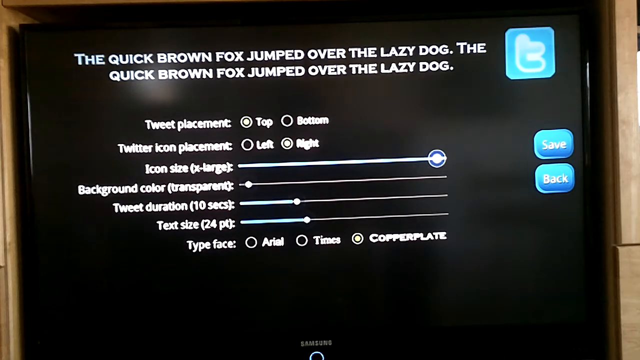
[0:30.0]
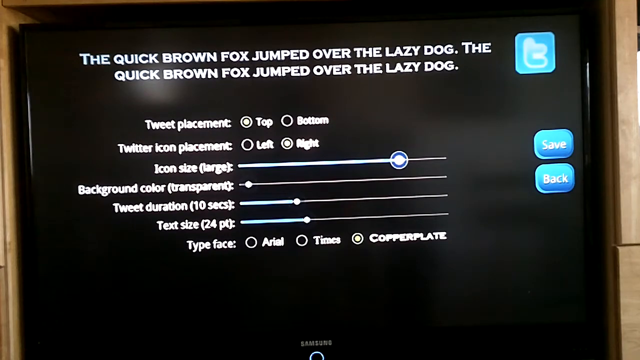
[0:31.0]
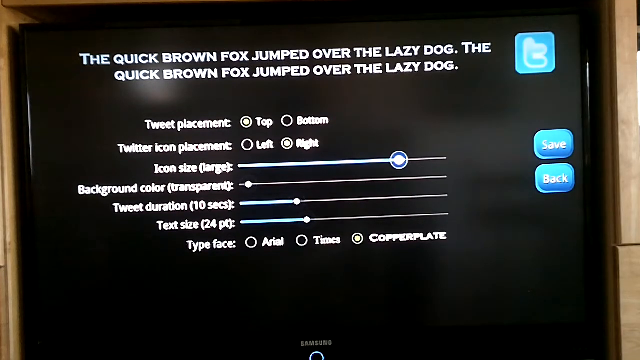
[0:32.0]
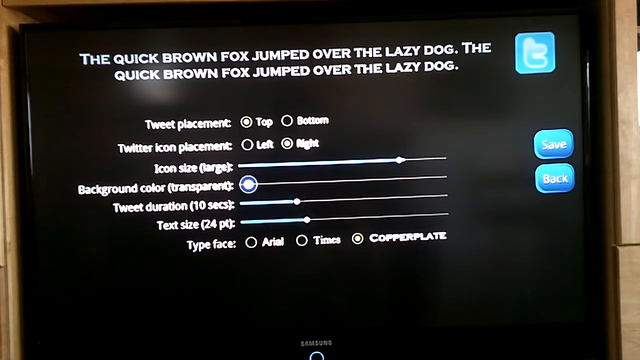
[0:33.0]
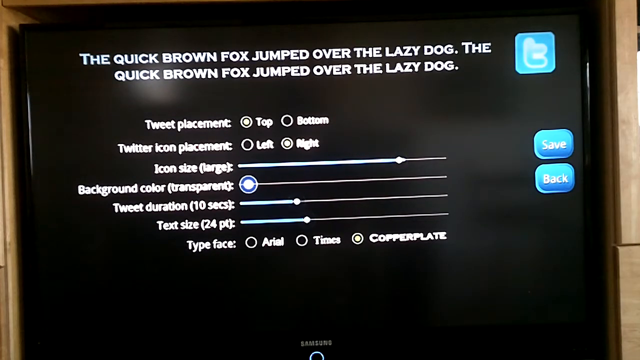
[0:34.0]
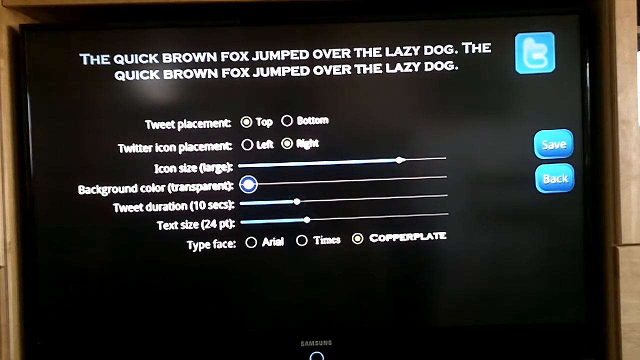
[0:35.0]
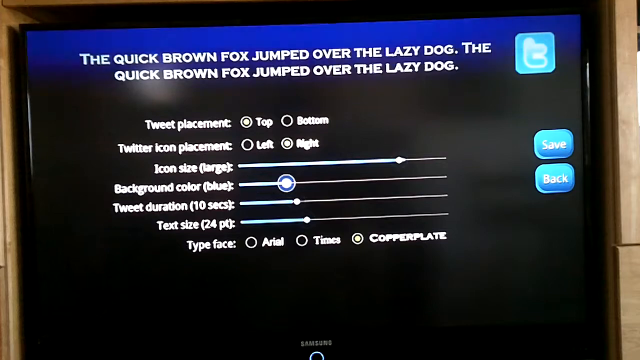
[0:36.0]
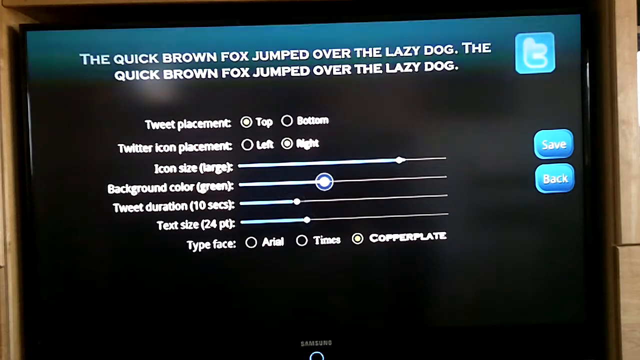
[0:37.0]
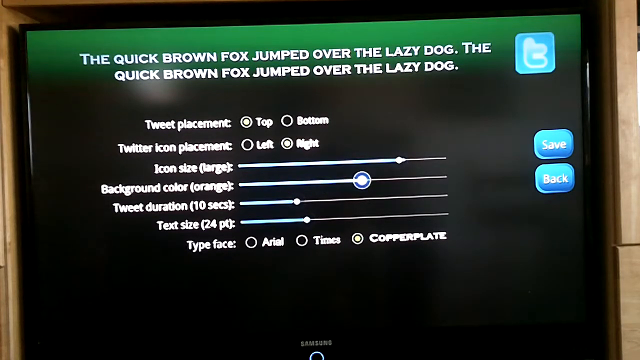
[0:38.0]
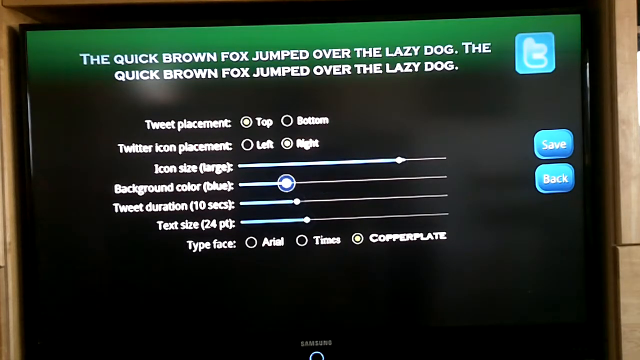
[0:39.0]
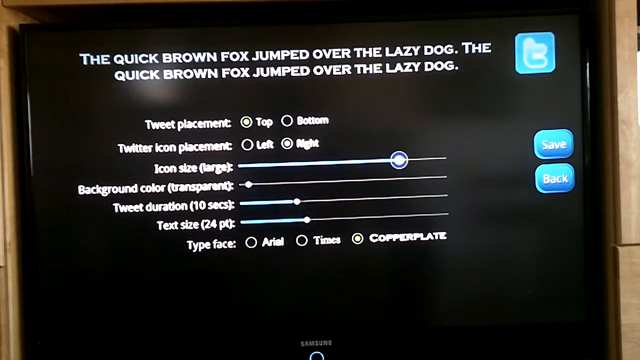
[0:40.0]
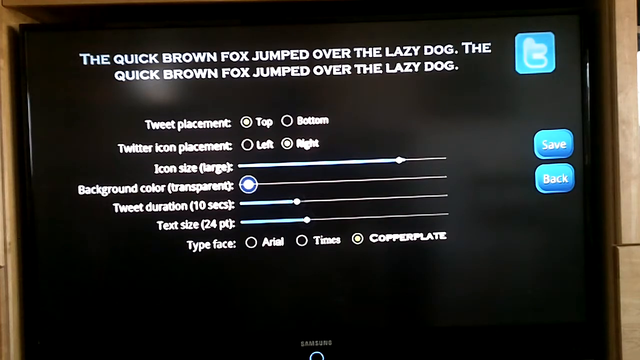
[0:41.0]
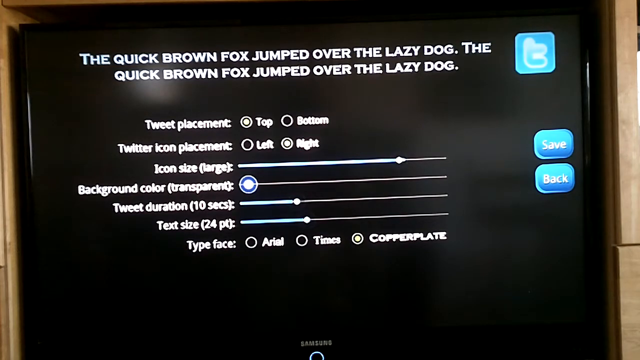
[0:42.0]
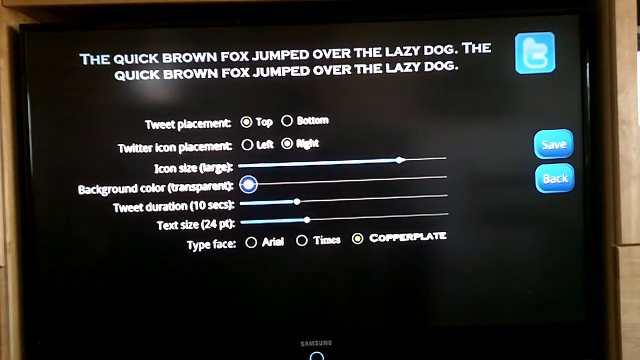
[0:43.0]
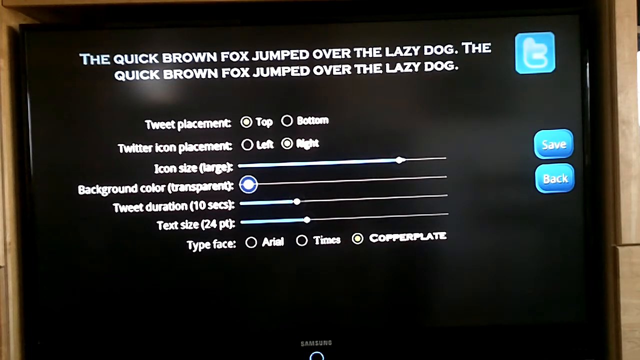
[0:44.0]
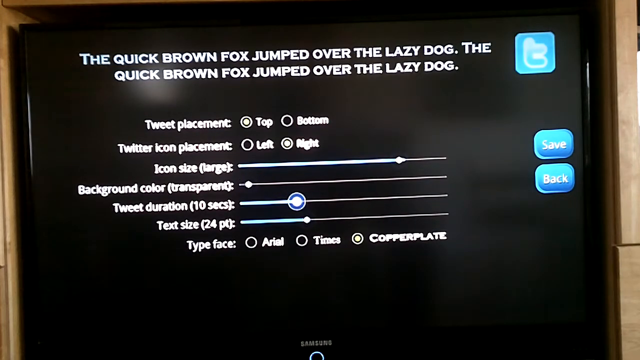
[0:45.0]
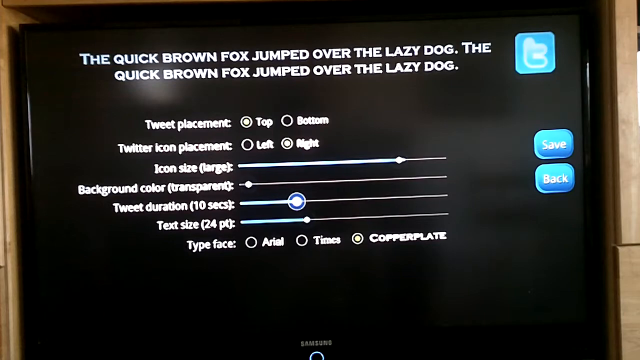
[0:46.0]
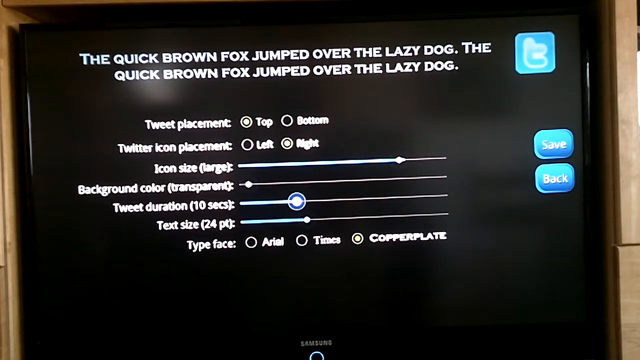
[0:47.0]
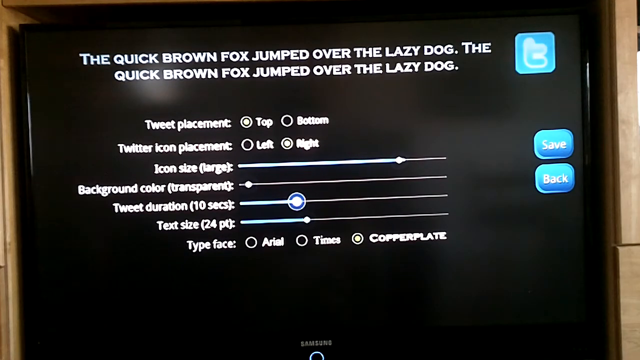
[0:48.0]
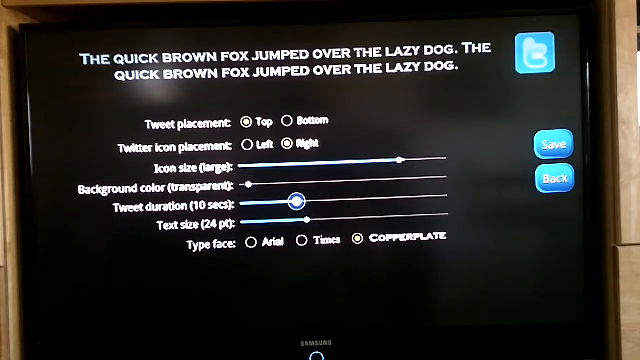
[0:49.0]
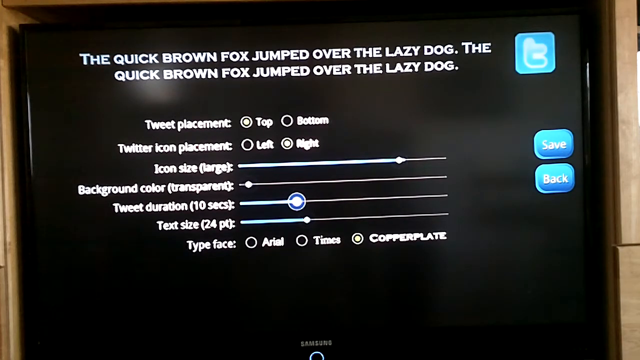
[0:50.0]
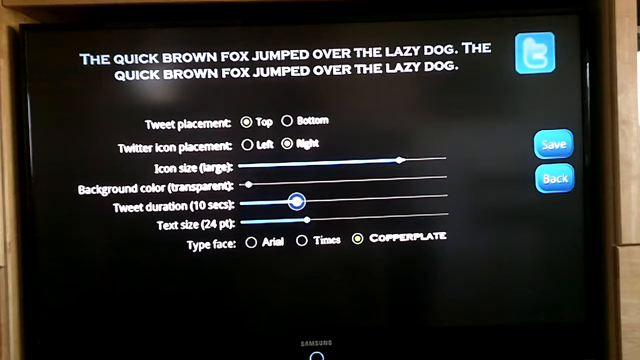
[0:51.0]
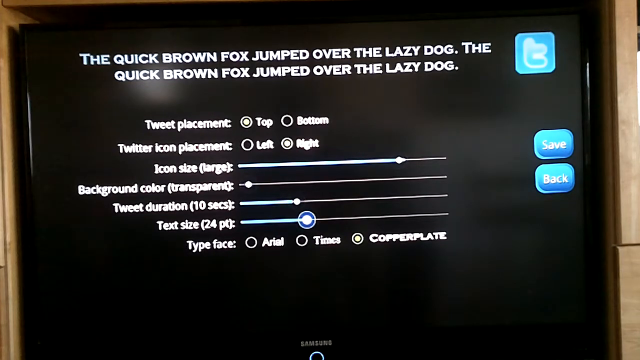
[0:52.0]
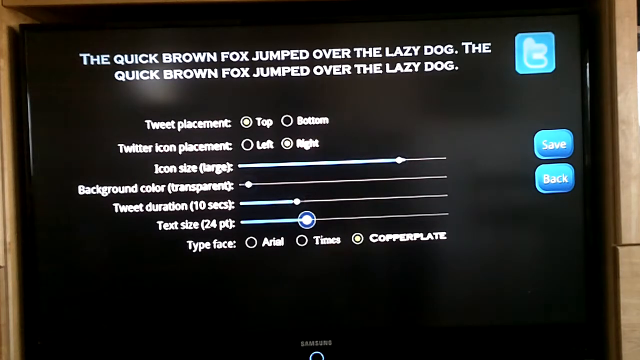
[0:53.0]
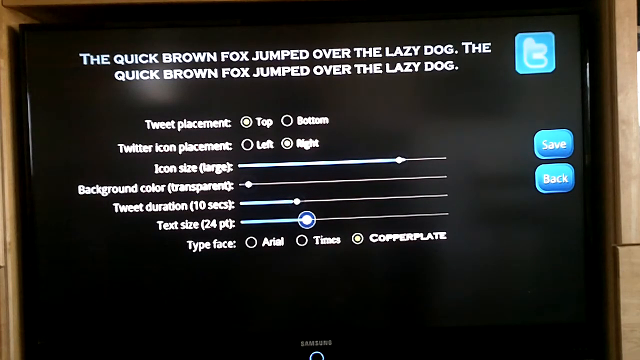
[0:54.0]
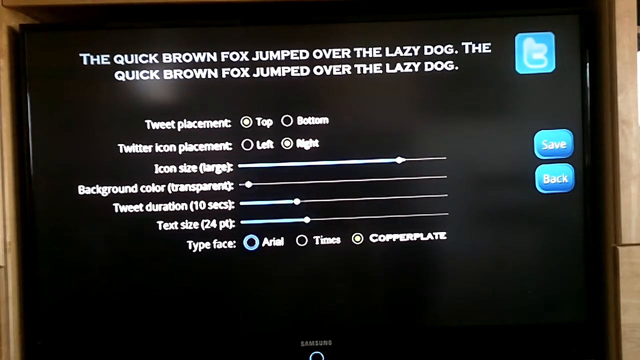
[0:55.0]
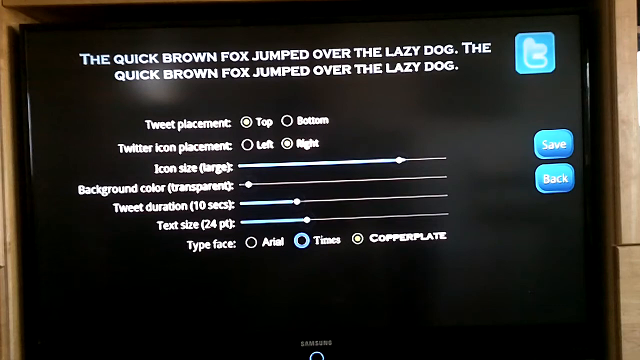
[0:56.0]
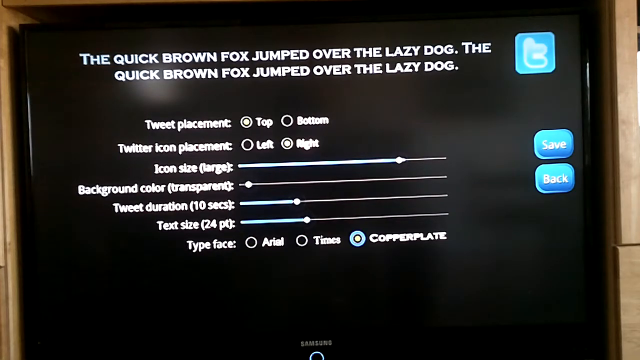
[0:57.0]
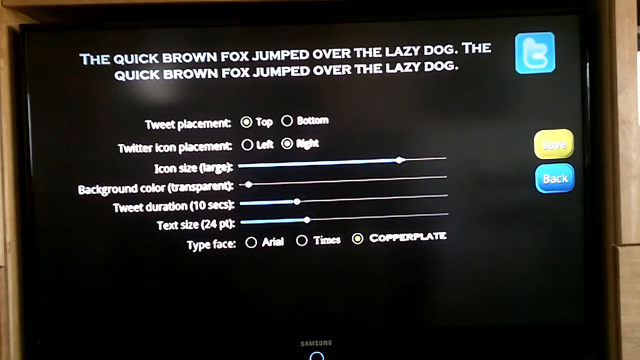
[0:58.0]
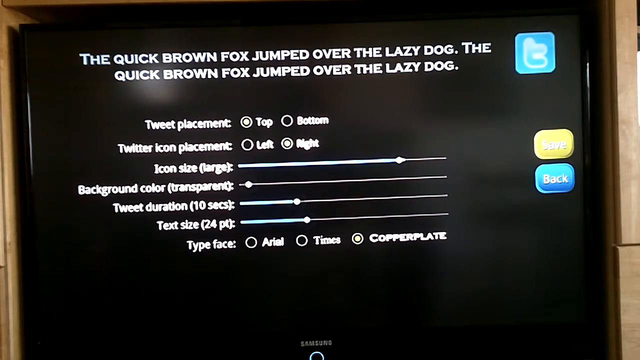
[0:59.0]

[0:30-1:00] A menu appears on a TV screen. White text at the top reads "the quick brown fox jumped over the lazy dog. The quick brown fox jumped over the lazy dog." Below that are settings: "tweet placement" is set to top, "Twitter icon placement" is set to right, "icon shape" is set almost to maximum size, "background color transparent" is barely on, "tweet duration" is set at 10 seconds, "text size" is set at 24pt, and "typeface" is copperplate. Somebody is probably operating a remote off screen, choosing different things on the menu and changing some of the settings. In the top right corner of the TV screen is a blue square with a T inside it. Below that, on the right side of the screen, are a button that says "Save" and another that says "Back". The entire background behind the text and buttons is pitch black.